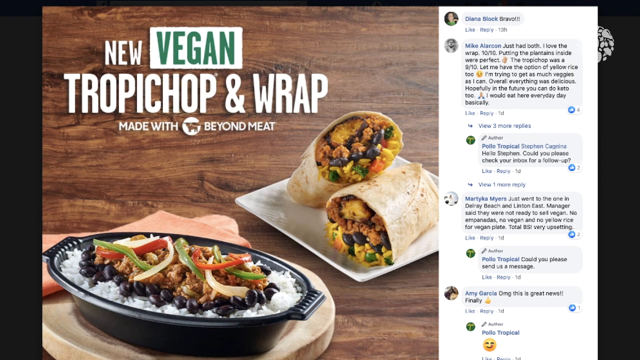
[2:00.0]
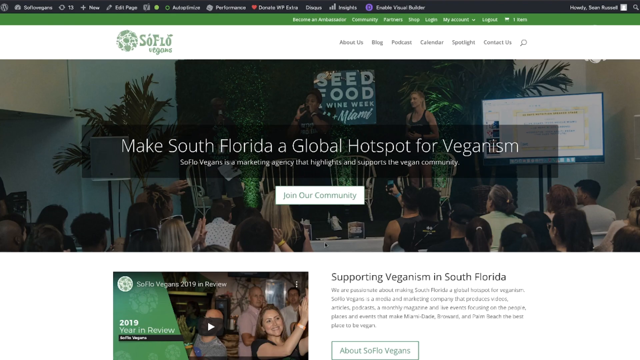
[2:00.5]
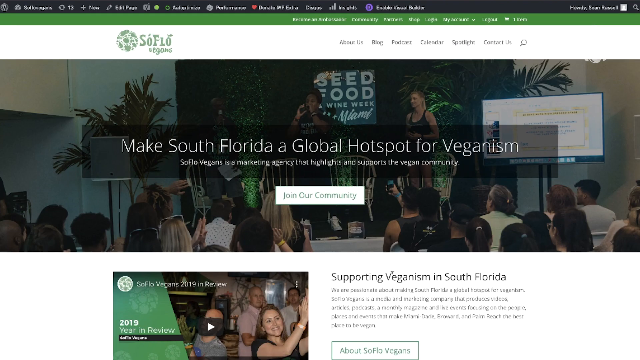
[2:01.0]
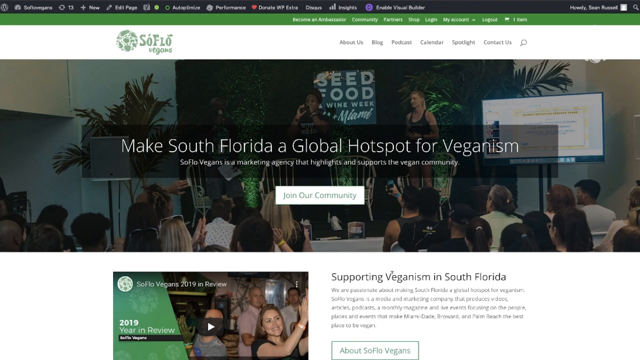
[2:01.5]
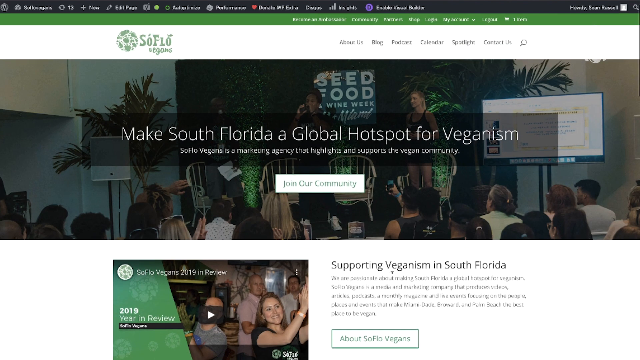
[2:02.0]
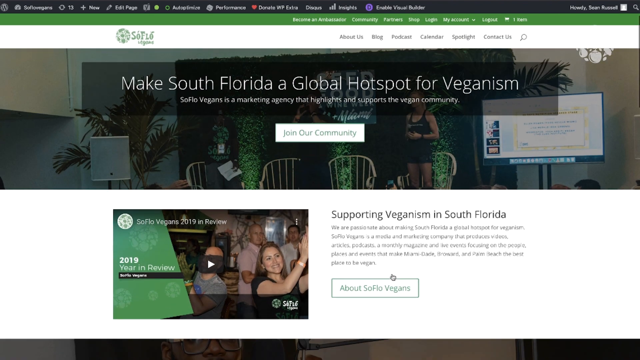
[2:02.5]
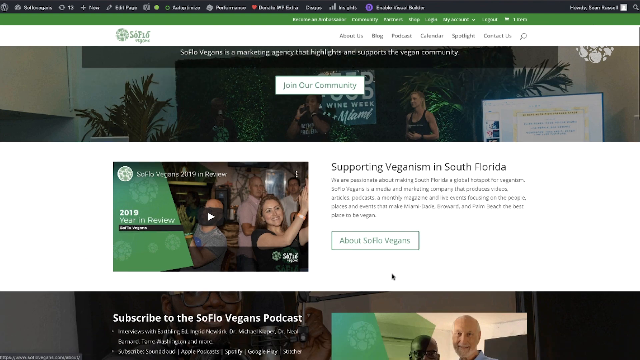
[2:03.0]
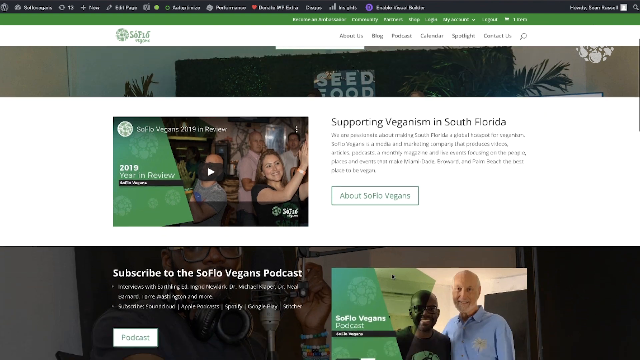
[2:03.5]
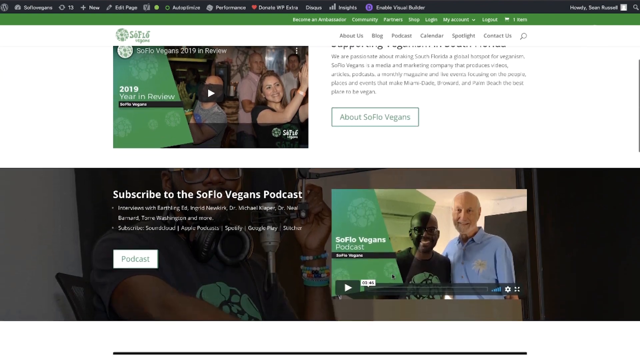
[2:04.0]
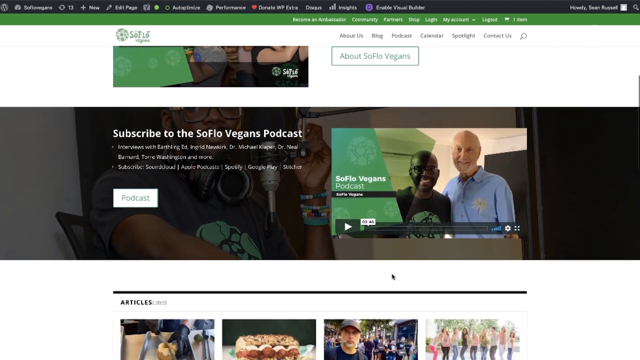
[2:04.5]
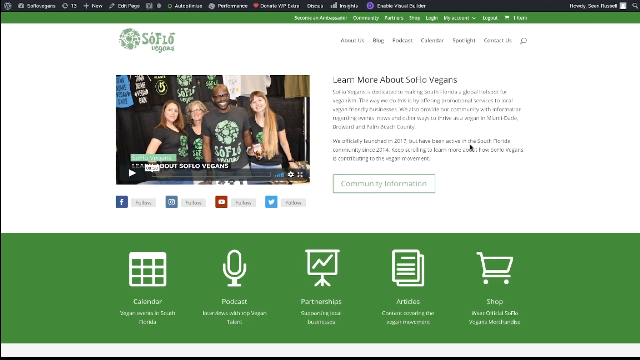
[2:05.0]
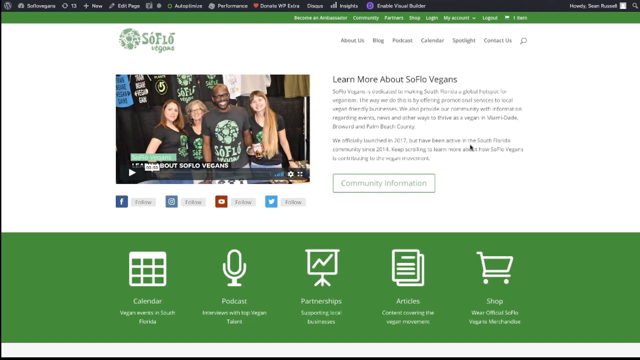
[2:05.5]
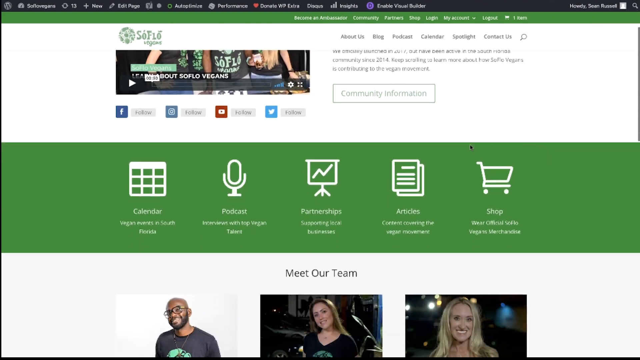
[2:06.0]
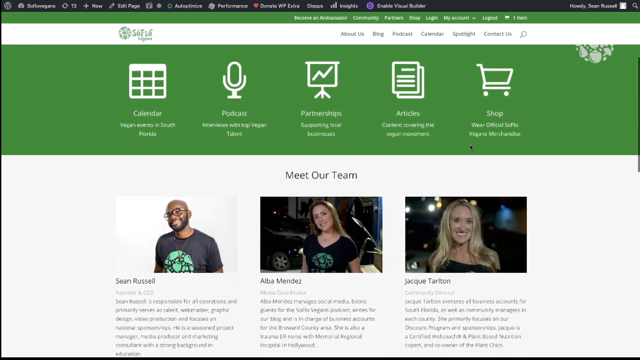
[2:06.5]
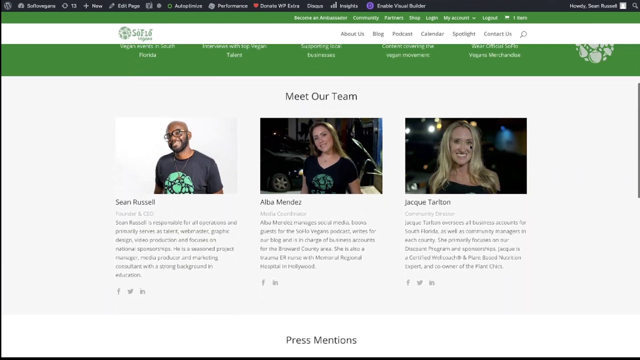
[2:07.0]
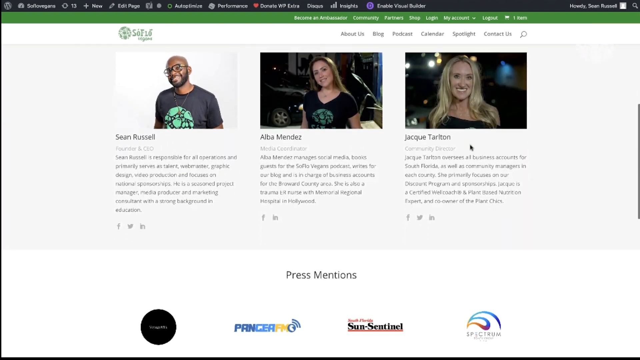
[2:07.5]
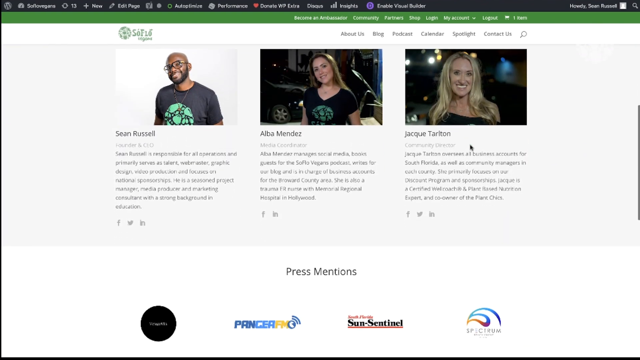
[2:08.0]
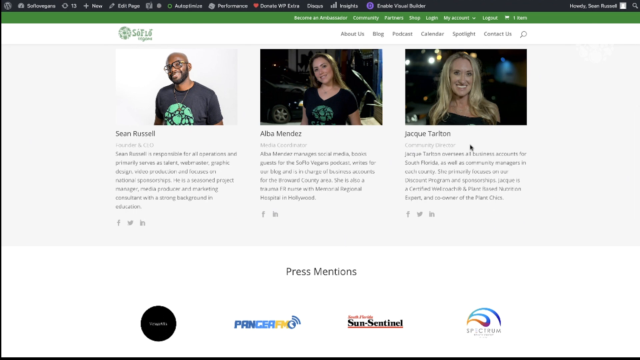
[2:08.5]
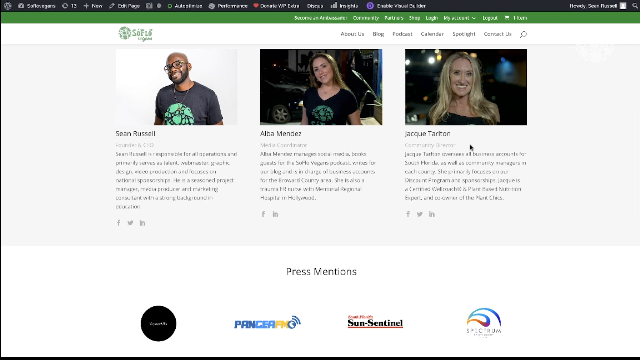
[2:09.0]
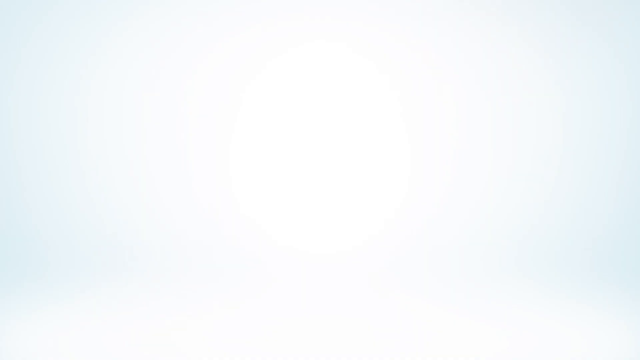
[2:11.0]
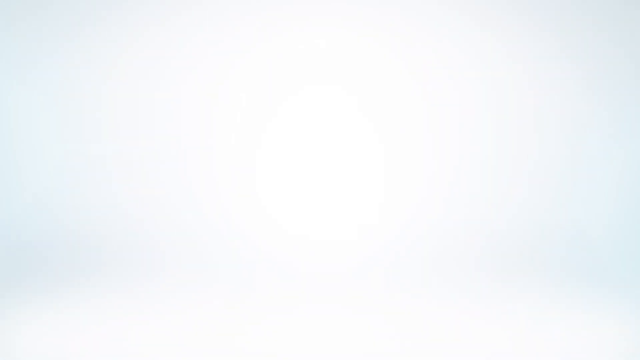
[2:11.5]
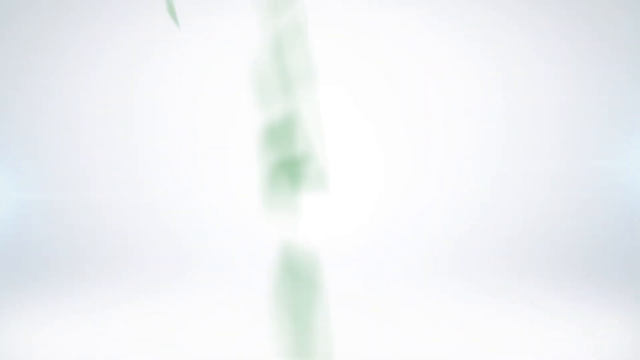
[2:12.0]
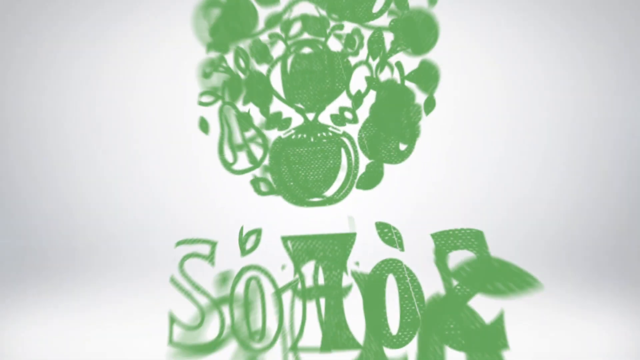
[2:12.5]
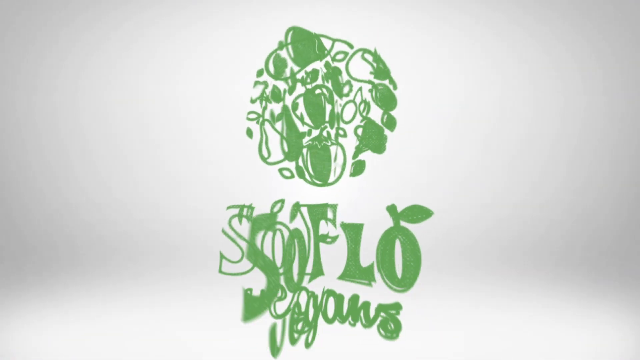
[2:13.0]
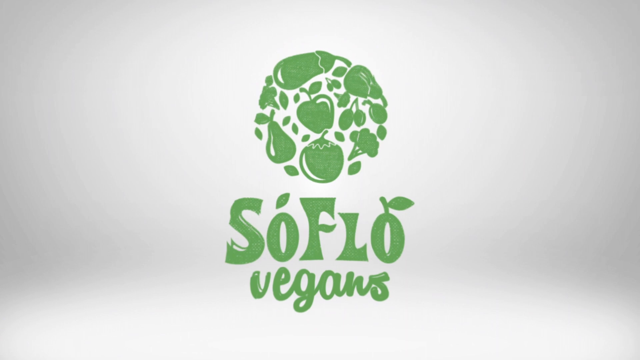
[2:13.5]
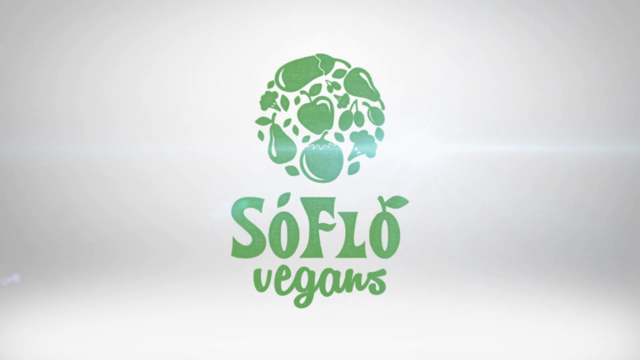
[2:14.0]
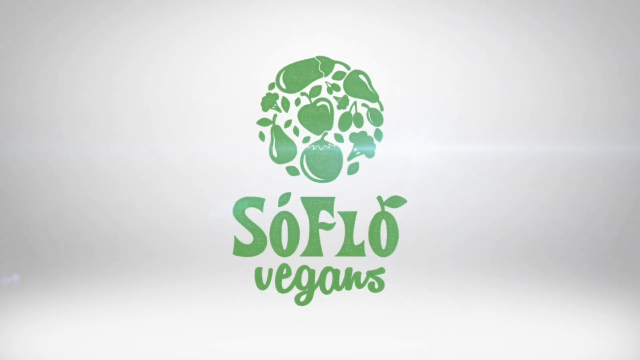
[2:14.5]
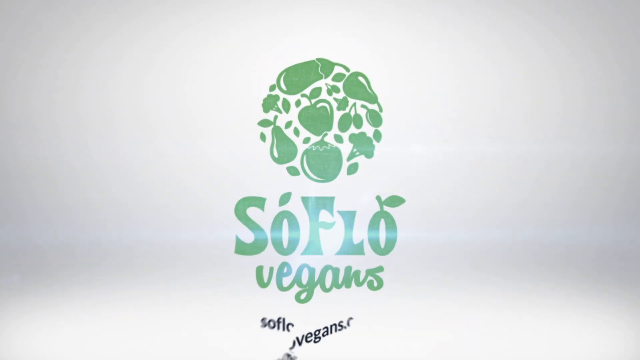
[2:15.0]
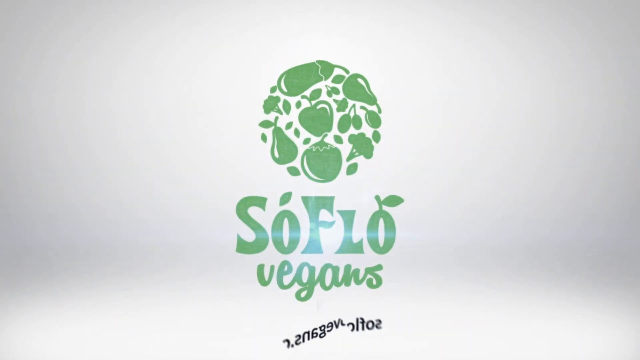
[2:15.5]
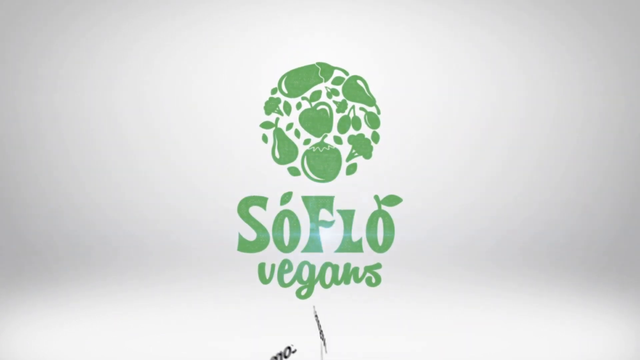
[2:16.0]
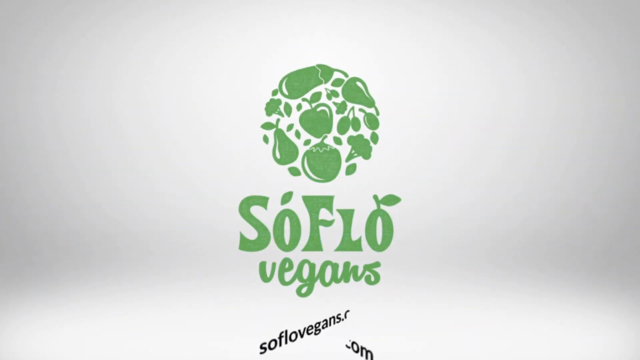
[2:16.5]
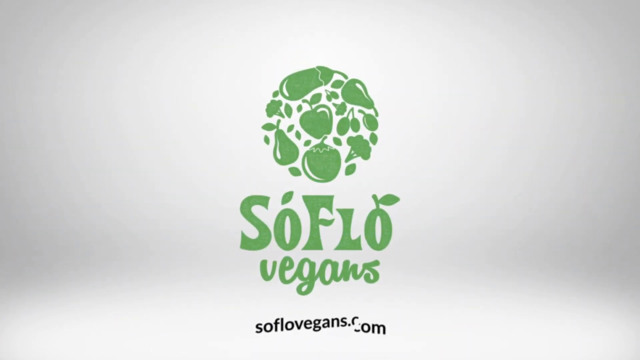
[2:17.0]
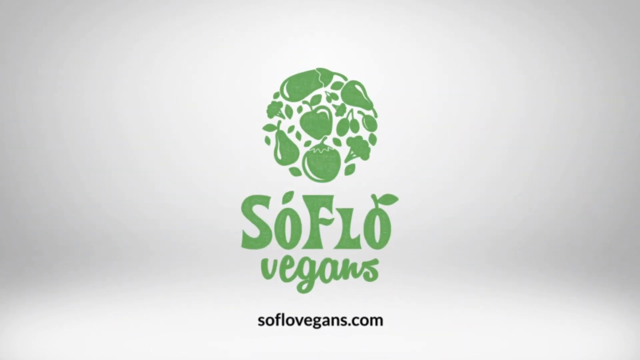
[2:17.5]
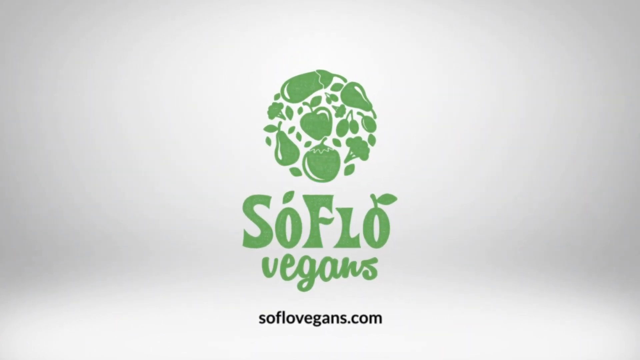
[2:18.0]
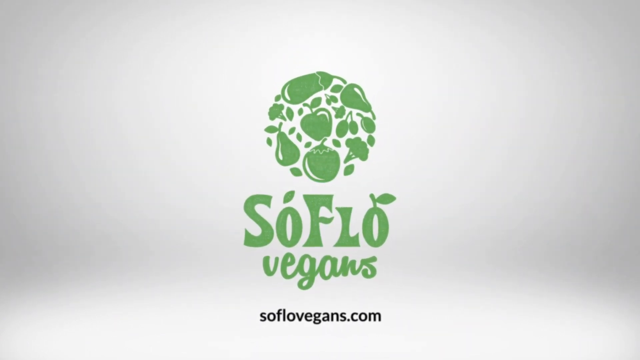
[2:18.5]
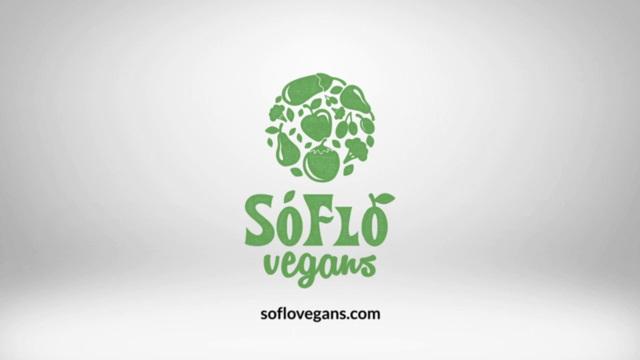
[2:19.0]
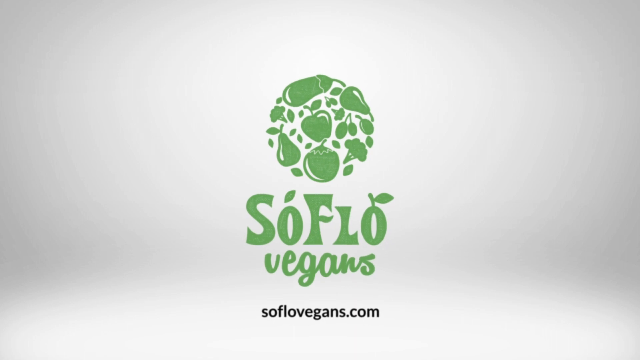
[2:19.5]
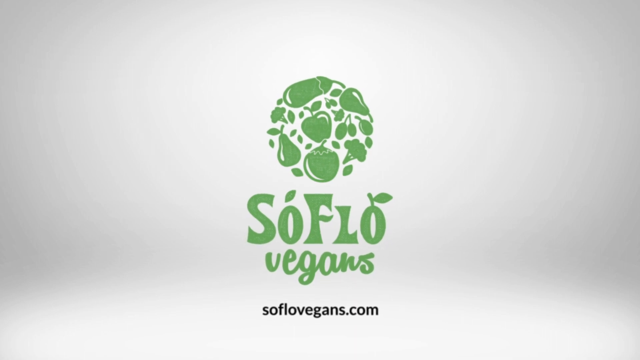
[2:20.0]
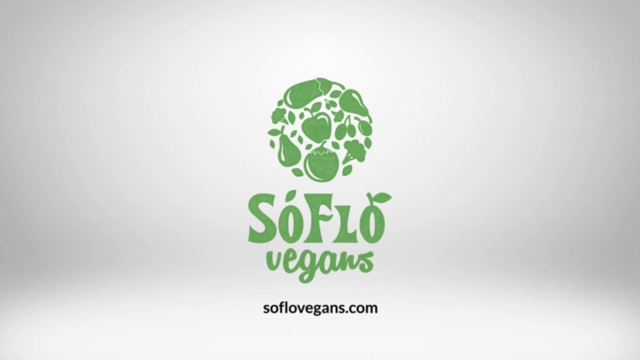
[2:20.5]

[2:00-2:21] A new page shows people, some on a stage and others in what looks like a seminar, with the text "make South Florida a global hotspot for veganism" and "join our community." People are seated and two women are on stage. Scrolling down reveals holidays, a 2019 year review, "subscribe today" and vegan podcasts, with a Black man and a white man in the frame. A menu lists about us, blog, podcast, calendar, spotlights, contact us and a search button, and social media links for Facebook, YouTube and Twitter appear. There is community information and a meet our team section showing Sean Russell, Alba Mendes and a woman whose name is not clearly visible.